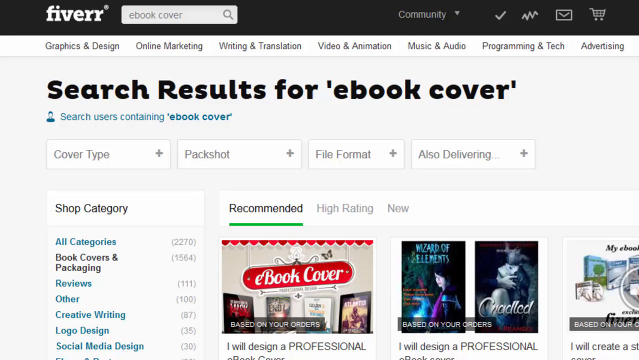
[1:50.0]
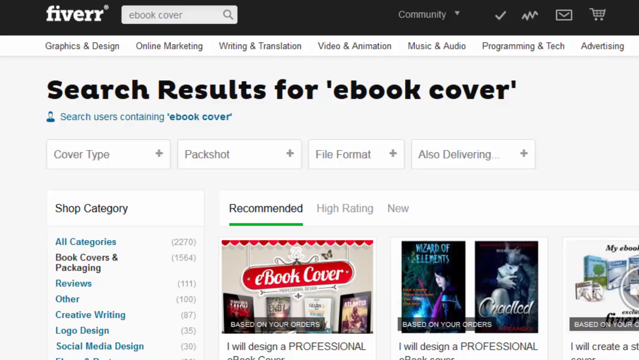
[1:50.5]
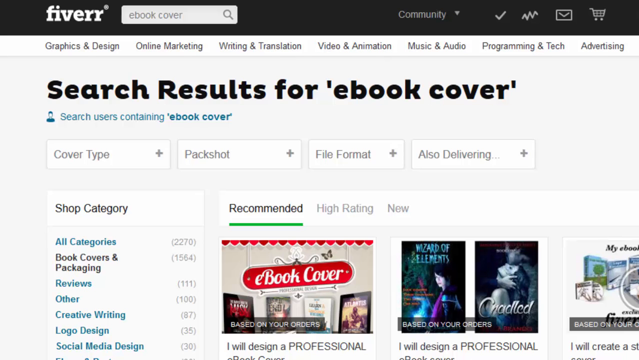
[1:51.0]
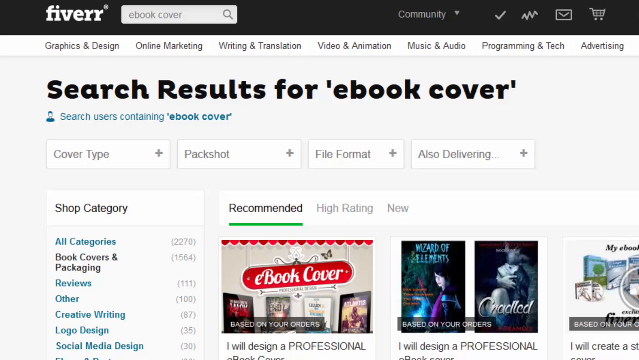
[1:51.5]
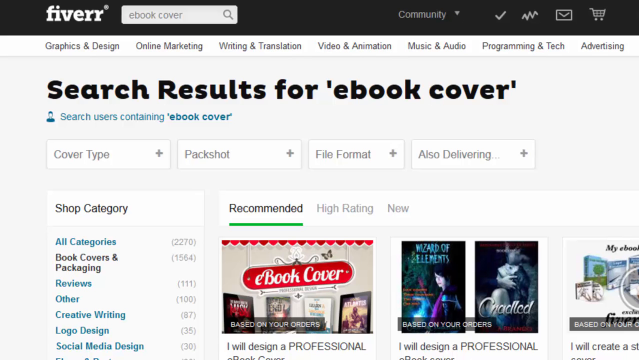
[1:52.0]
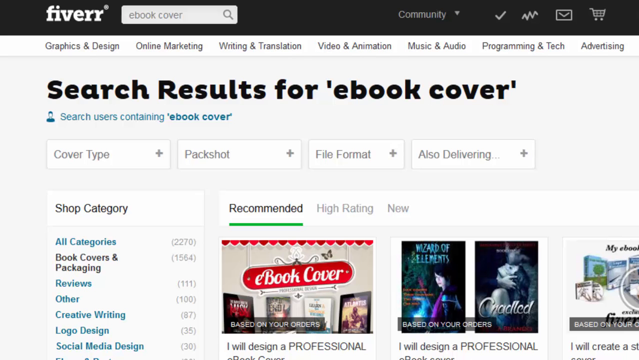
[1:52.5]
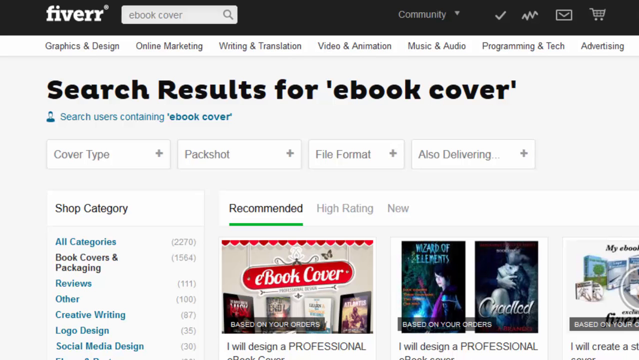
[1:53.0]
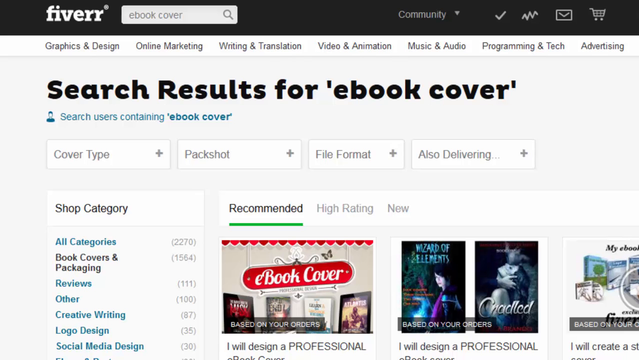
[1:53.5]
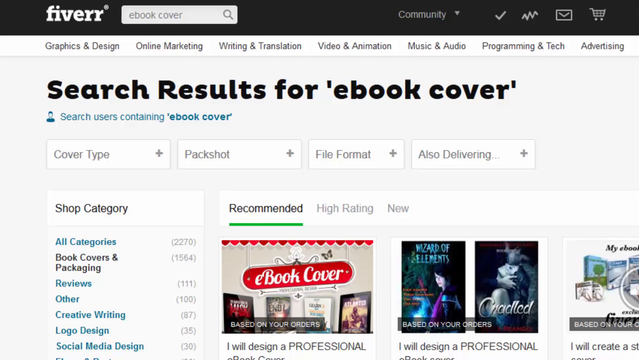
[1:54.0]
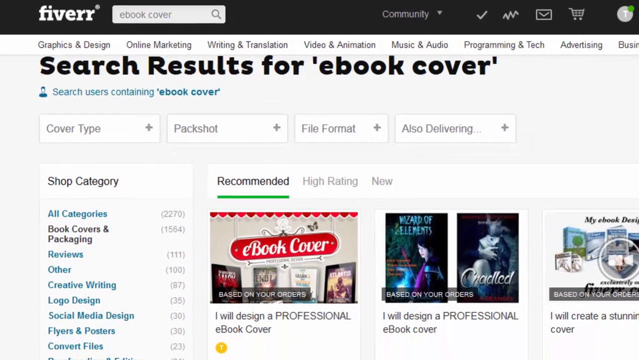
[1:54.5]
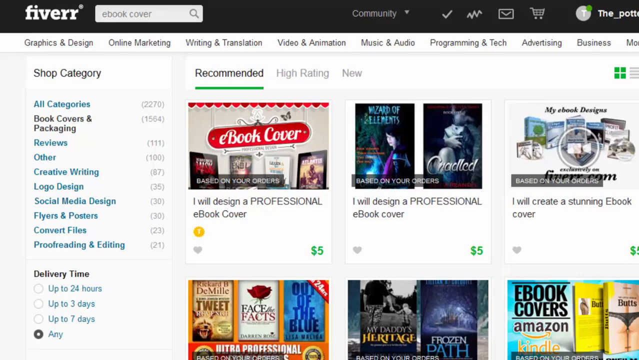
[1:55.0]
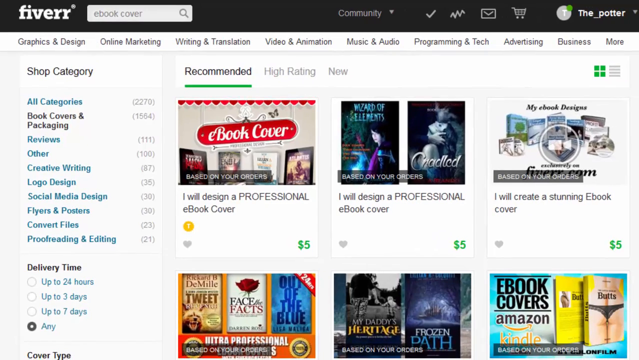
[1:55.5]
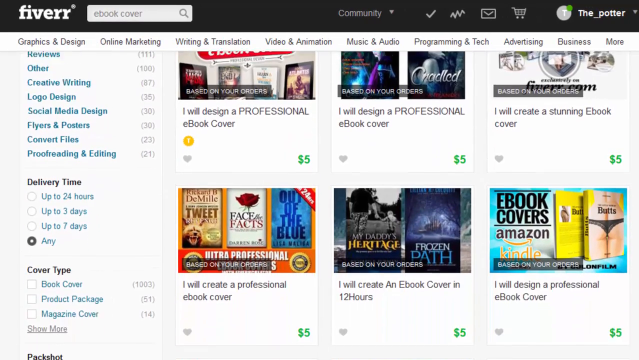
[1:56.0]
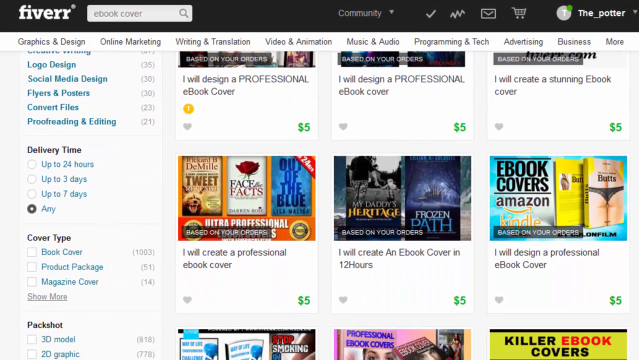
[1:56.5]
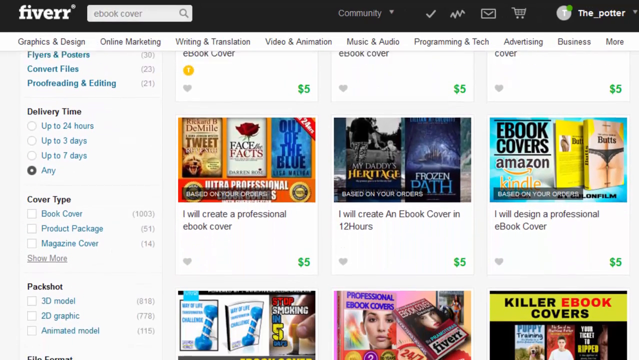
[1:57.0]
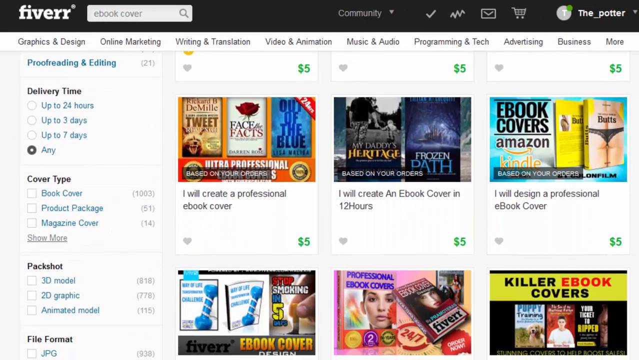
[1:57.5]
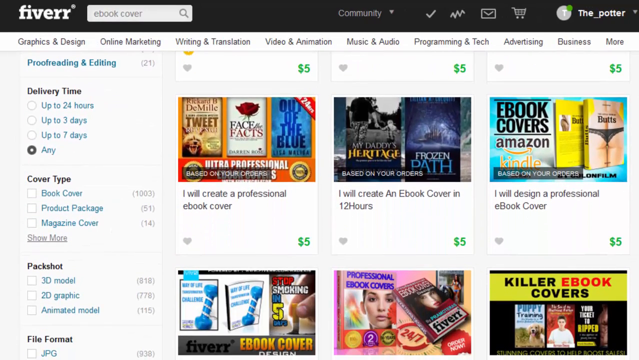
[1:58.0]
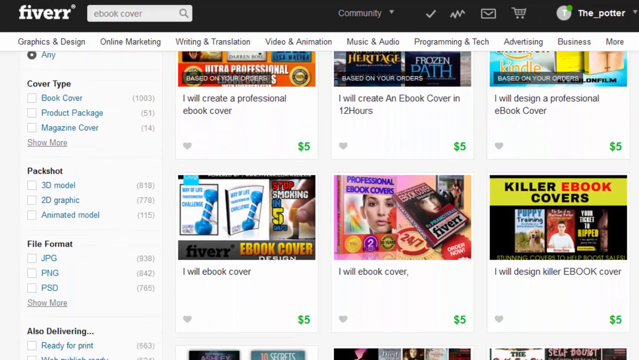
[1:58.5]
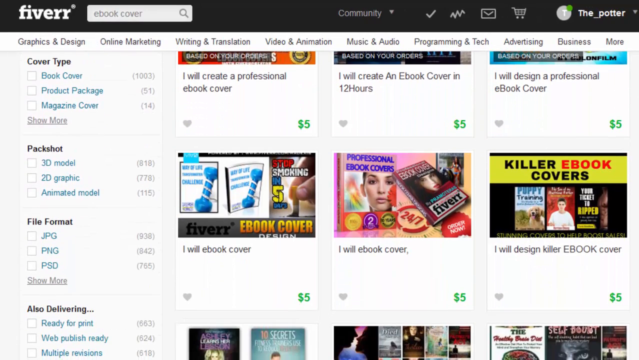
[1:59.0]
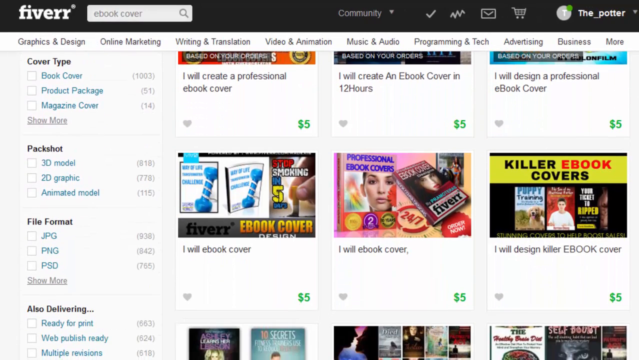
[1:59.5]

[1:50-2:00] The Fiverr web page has a black banner at the top, and it looks like "e-book cover" has already been typed and searched in the search bar. Below is a navigation bar with "graphics and design", "online marketing", "writing and translation", "video and animation", "music and audio", "programming and tech" and "advertising". Below that are search results for "e-book cover", with filter options: "cover type", "pack shot", "file format" and "also delivering", followed by options for the recommended search results. The camera pans out to show more of the page. On the left is "shop category" with a listing of categories such as "book covers and packaging", "reviews" and "other creative writing". On the right are thumbnails representing the professionals who create e-book covers, each with a representative banner at the top and a description below. The first says "I will design a professional e-book cover" and is listed at $5; the one in the middle is also listed at $5. The page then scrolls to show more of the options listed below.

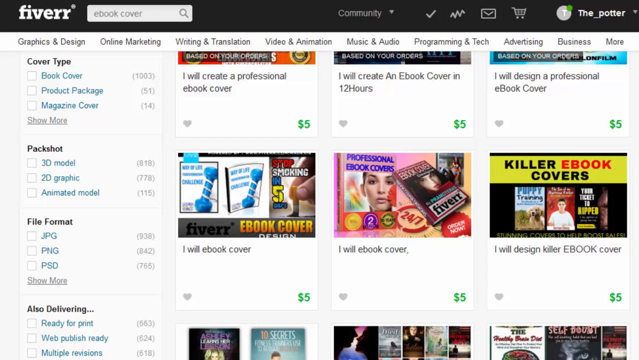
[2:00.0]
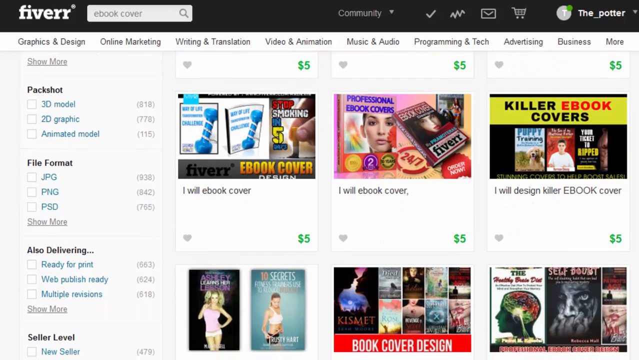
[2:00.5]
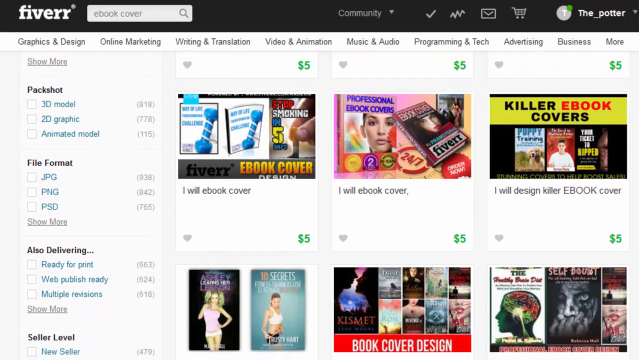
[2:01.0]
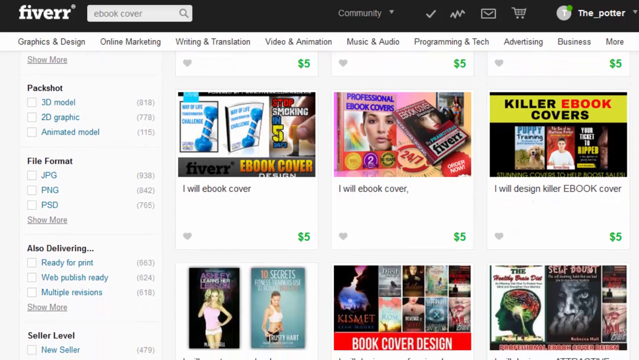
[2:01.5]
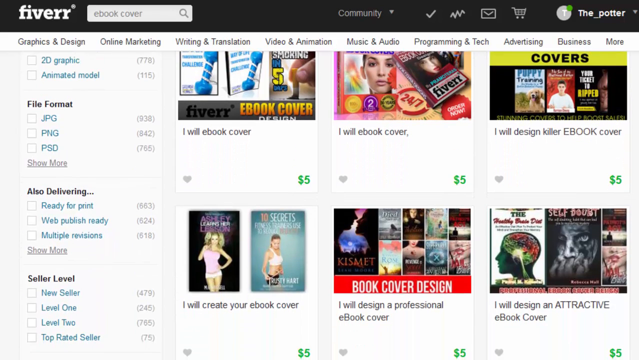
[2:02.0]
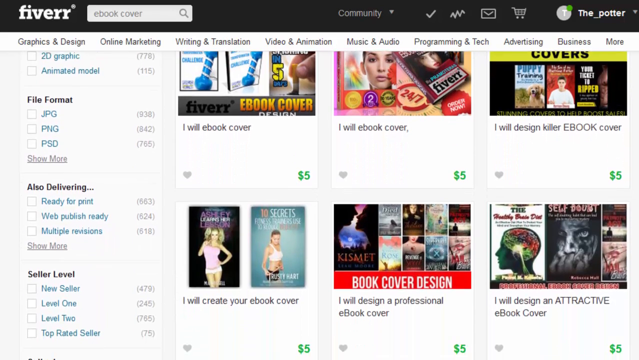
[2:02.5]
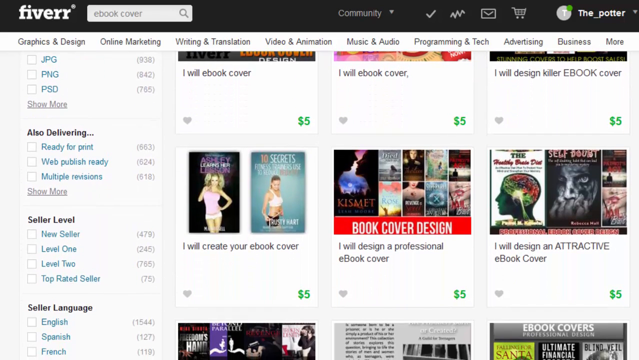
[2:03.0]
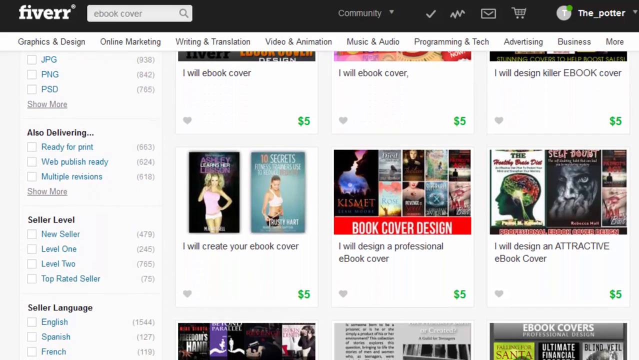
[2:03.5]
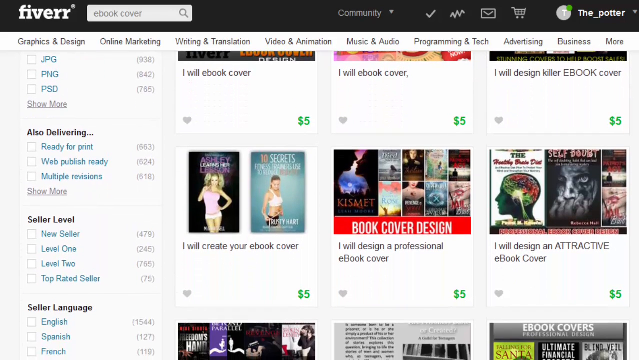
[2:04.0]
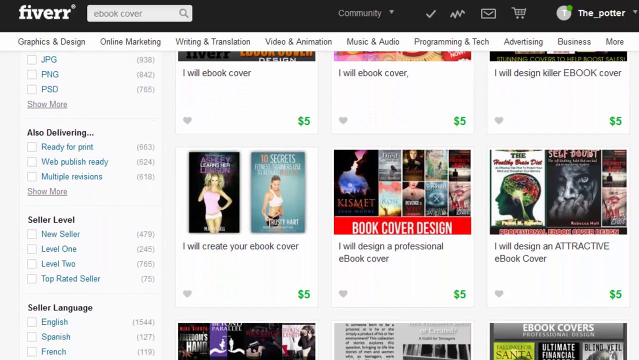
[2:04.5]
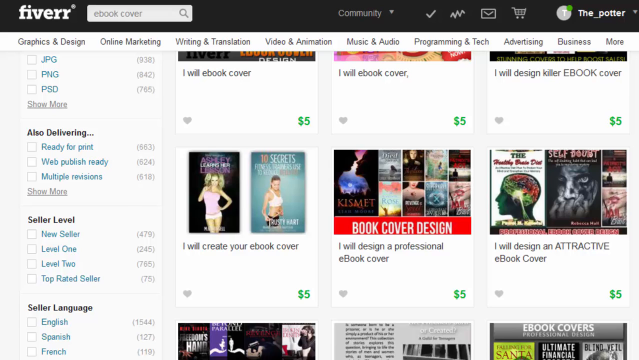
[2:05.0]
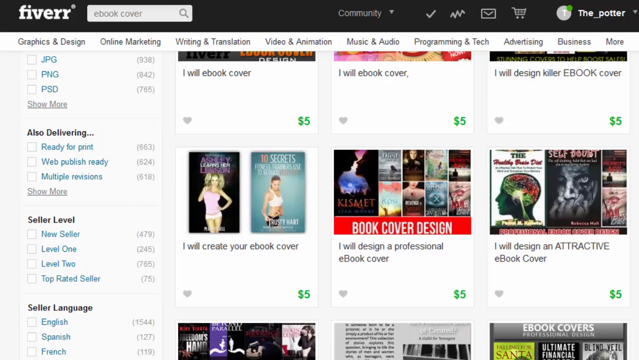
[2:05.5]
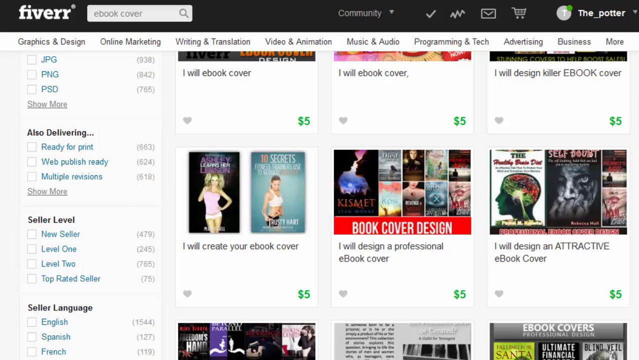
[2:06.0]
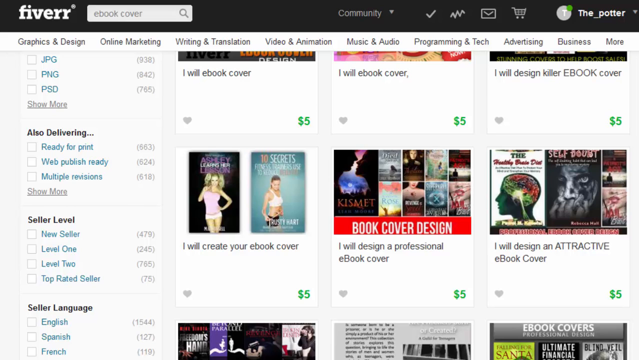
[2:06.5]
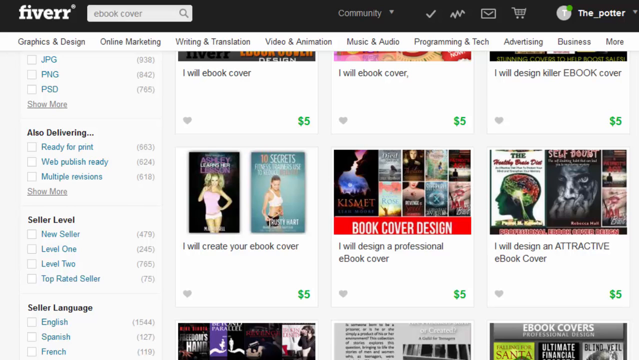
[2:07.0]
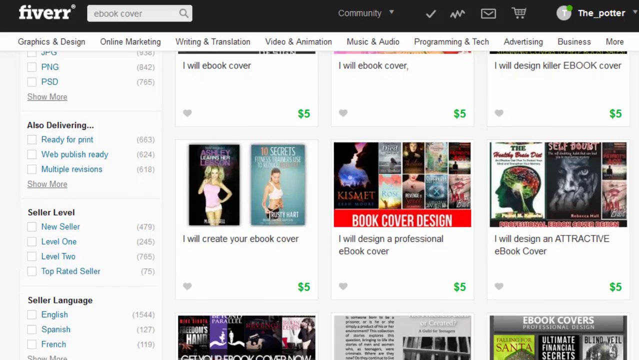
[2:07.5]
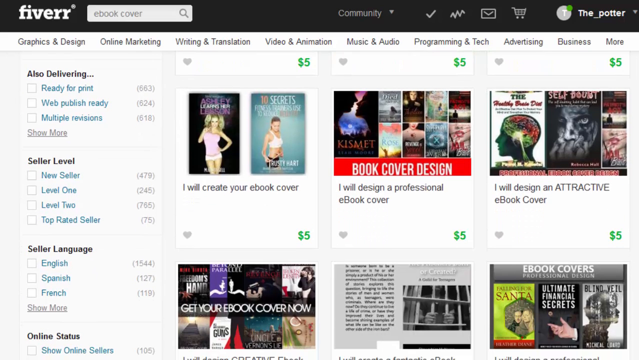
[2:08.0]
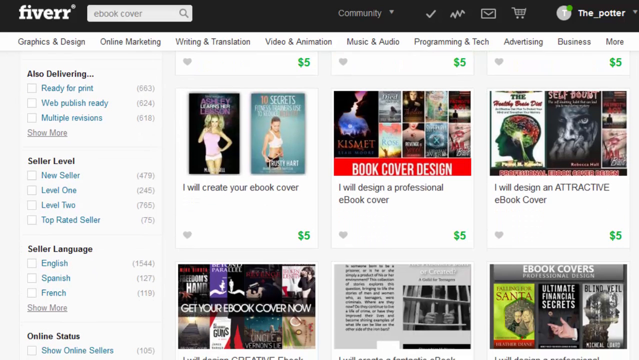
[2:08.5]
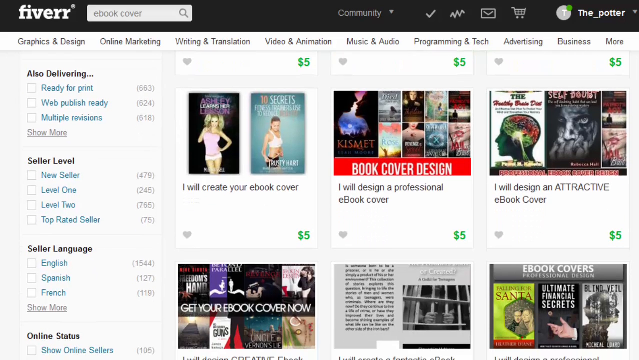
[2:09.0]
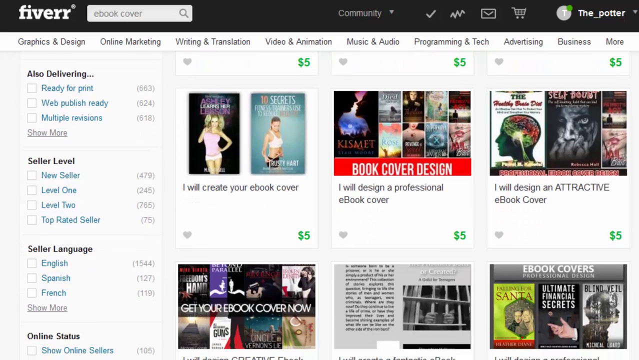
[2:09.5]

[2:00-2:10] On the Fiverr website, the page scrolls through the many options for people who design e-book covers. Some listings say "I will create an e-book cover in 12 hours", "I will e-book cover" and "I will design killer e-book cover". On the left are more sorting options: "cover type" with "book cover", "product package" and "magazine cover"; "pack shot" with "3D model", "2D graphic" and "animated model"; "file format" with "JPG", "PNG", "PSD" and "show more"; "also delivering" with options including "ready for post", "web publish", "ready" and "multiple reasons"; "seller level" with "new seller", "level one", "level two" and "top rated seller"; and "seller language" with "English", "Spanish" and "French".